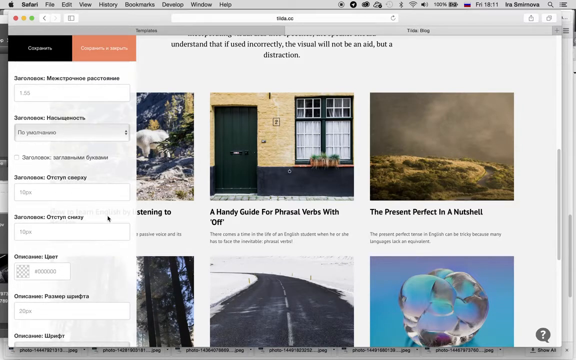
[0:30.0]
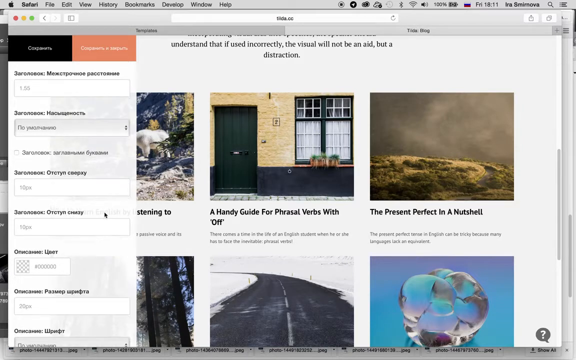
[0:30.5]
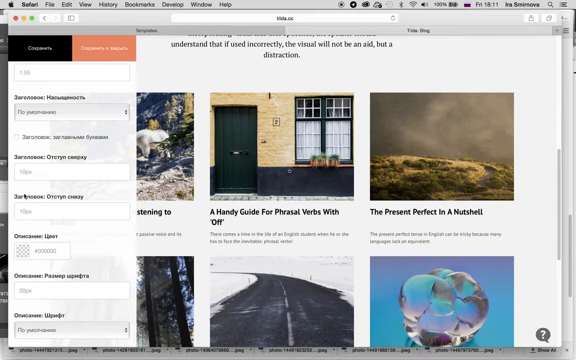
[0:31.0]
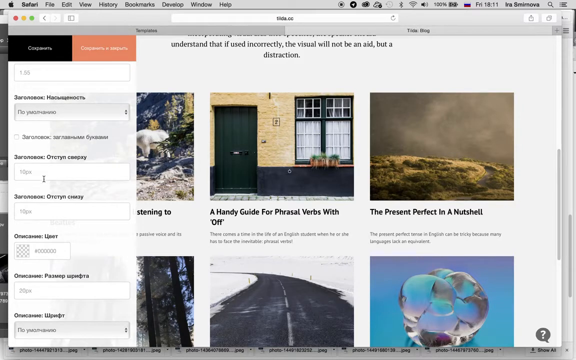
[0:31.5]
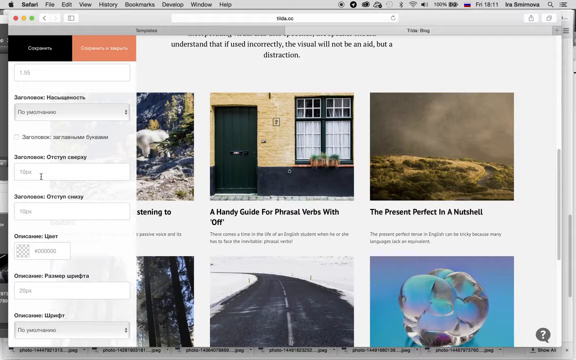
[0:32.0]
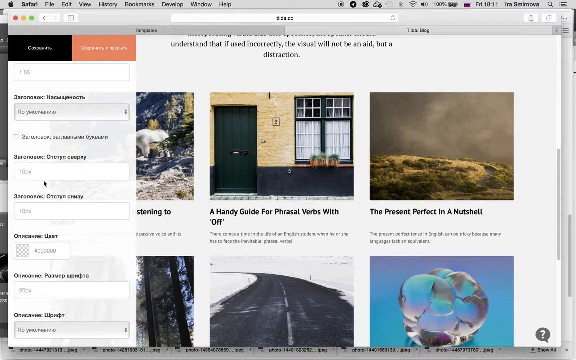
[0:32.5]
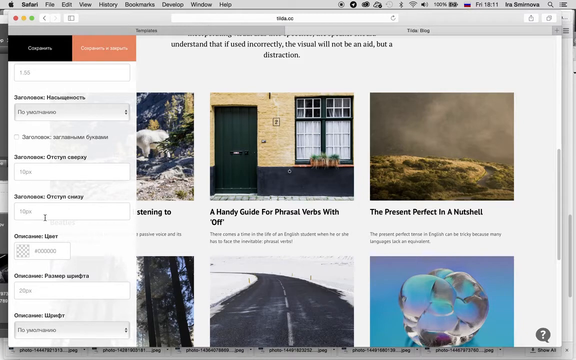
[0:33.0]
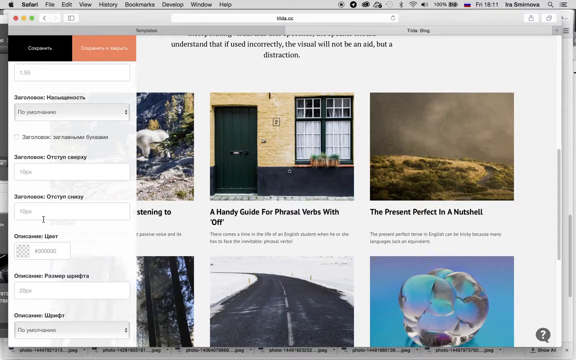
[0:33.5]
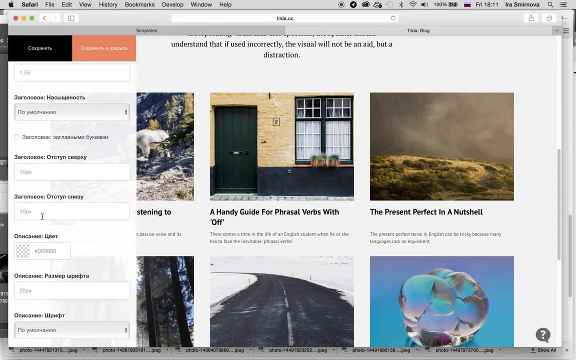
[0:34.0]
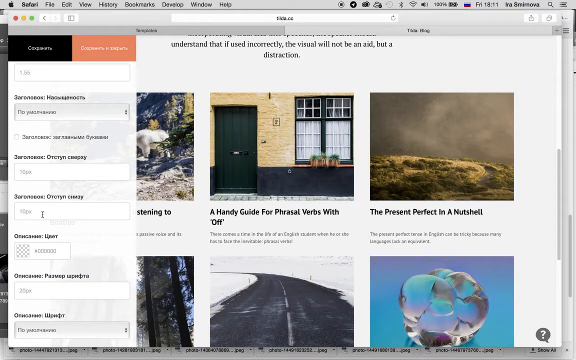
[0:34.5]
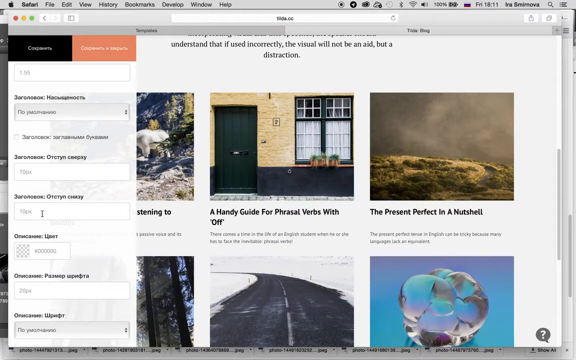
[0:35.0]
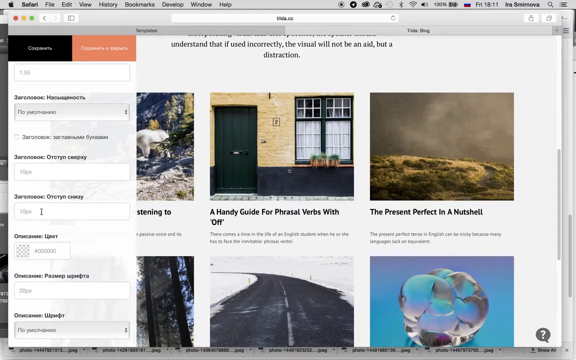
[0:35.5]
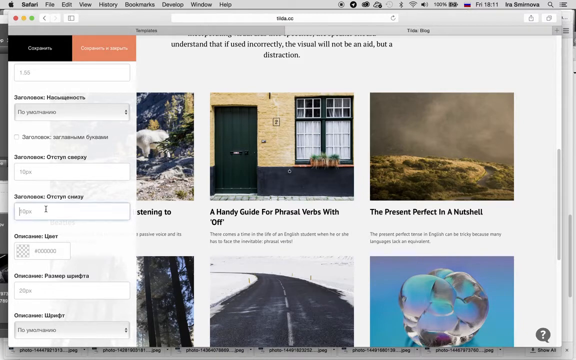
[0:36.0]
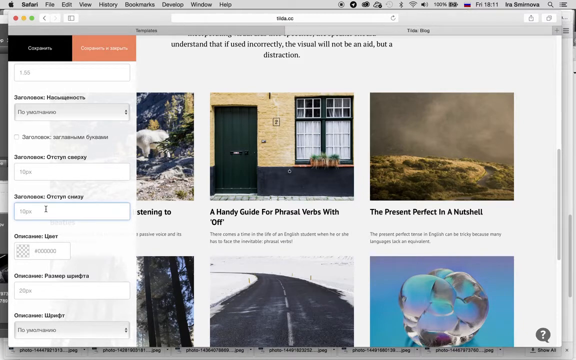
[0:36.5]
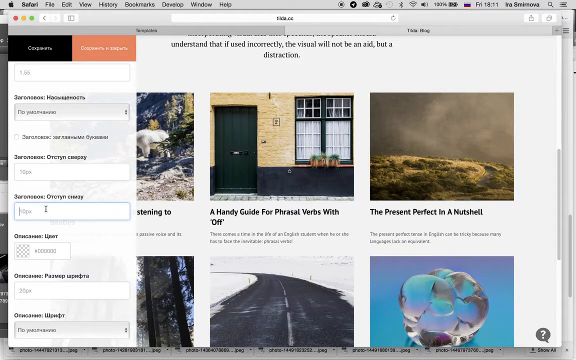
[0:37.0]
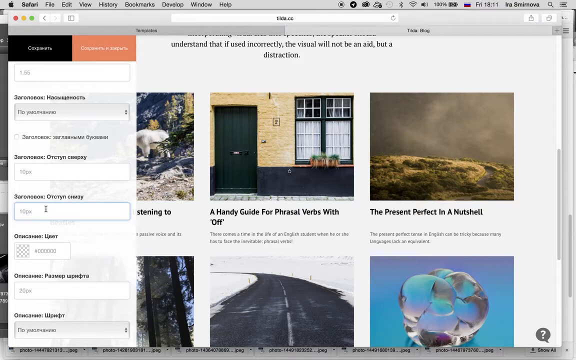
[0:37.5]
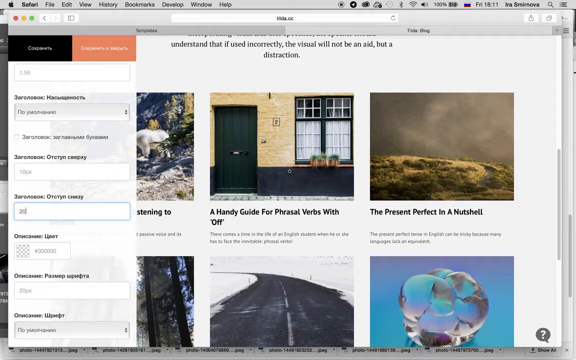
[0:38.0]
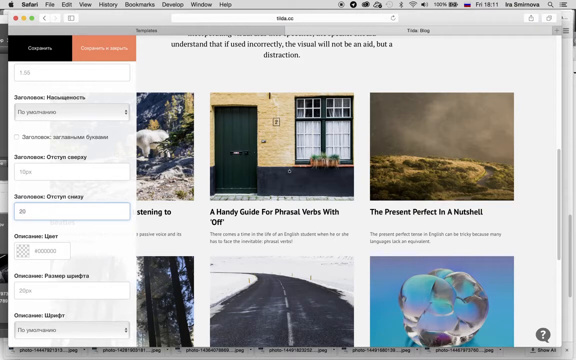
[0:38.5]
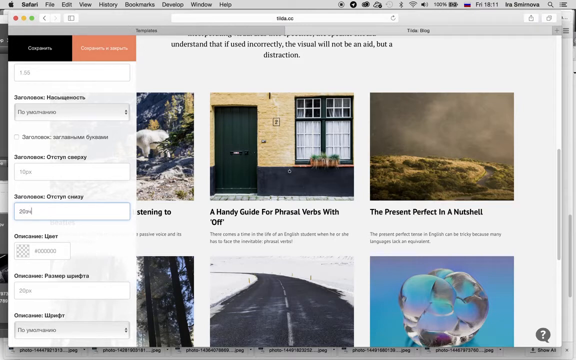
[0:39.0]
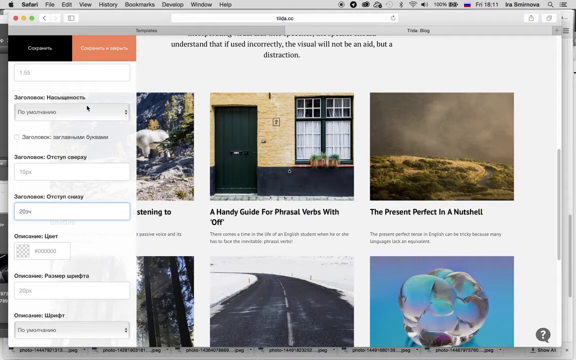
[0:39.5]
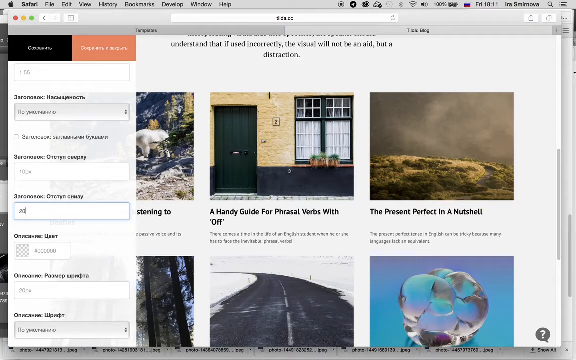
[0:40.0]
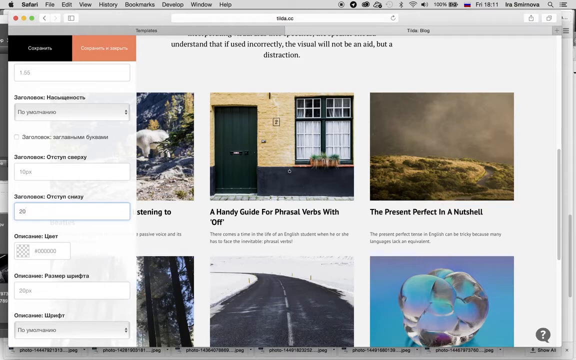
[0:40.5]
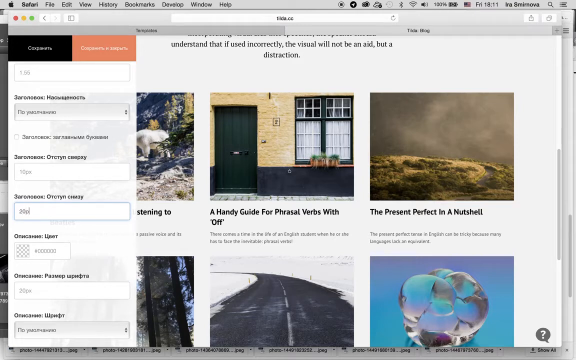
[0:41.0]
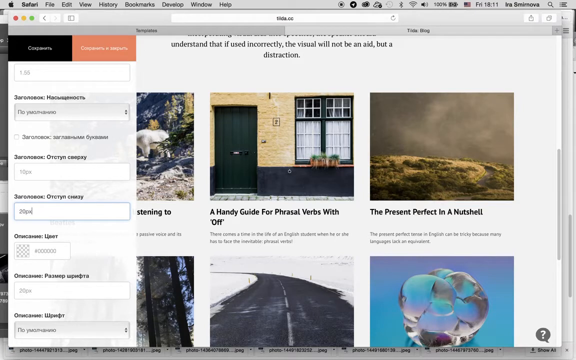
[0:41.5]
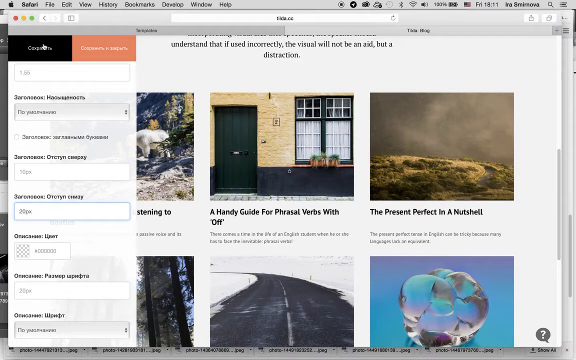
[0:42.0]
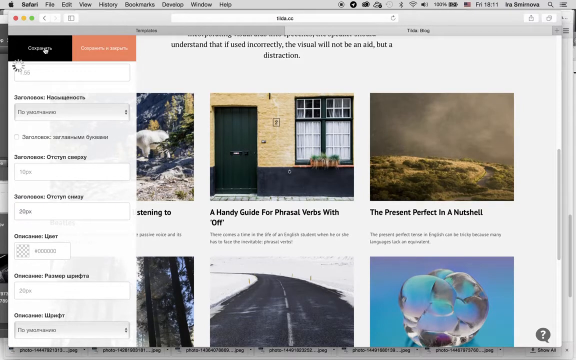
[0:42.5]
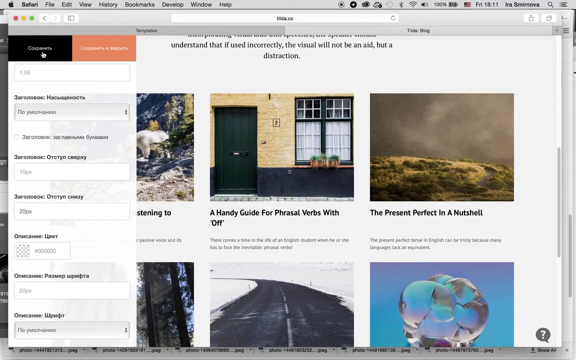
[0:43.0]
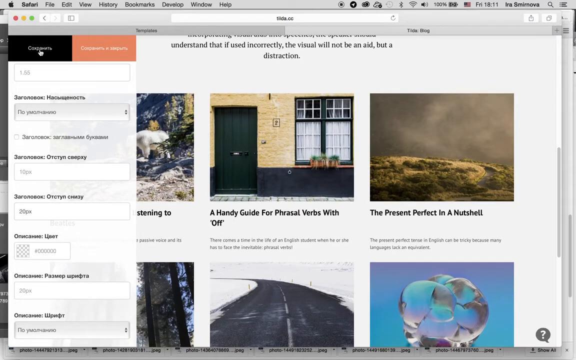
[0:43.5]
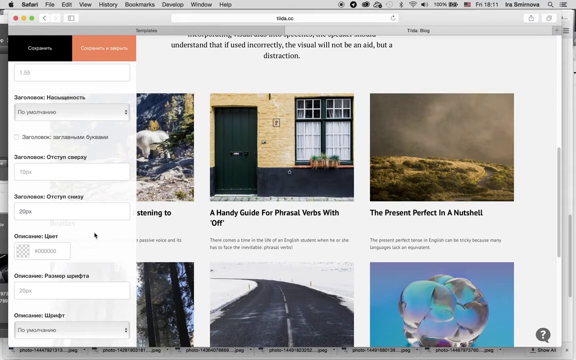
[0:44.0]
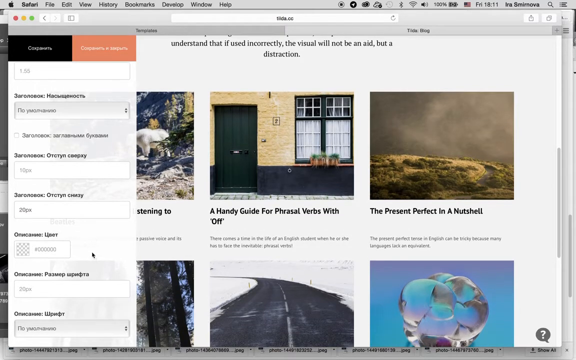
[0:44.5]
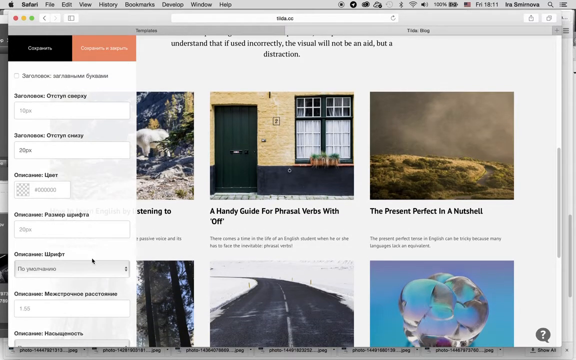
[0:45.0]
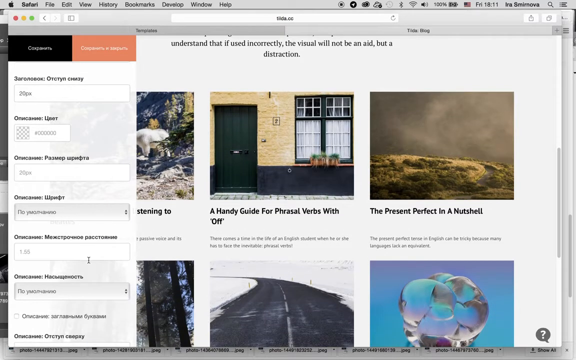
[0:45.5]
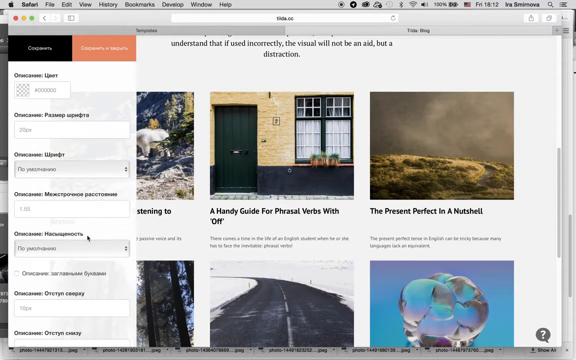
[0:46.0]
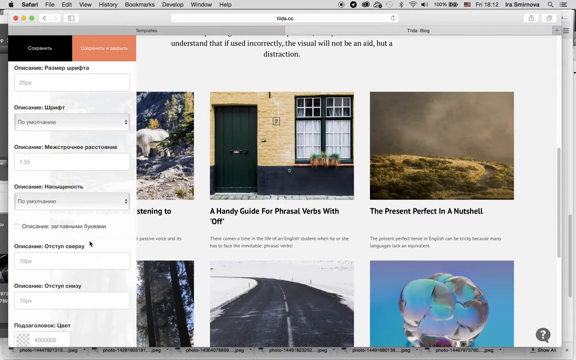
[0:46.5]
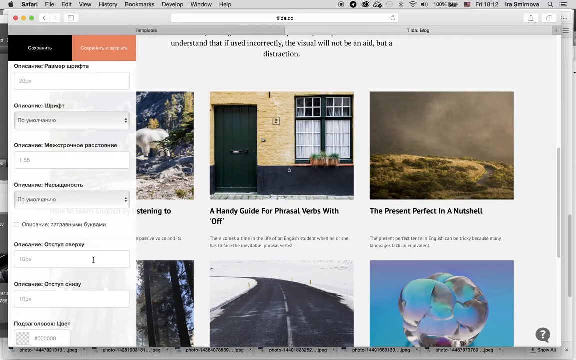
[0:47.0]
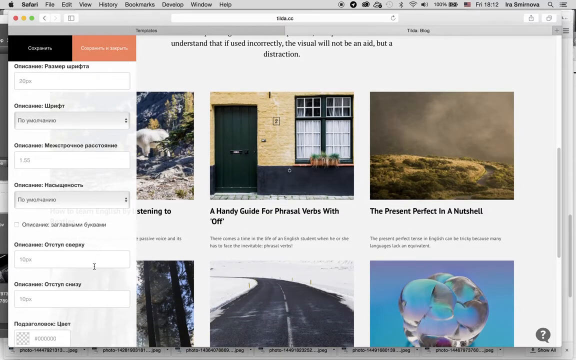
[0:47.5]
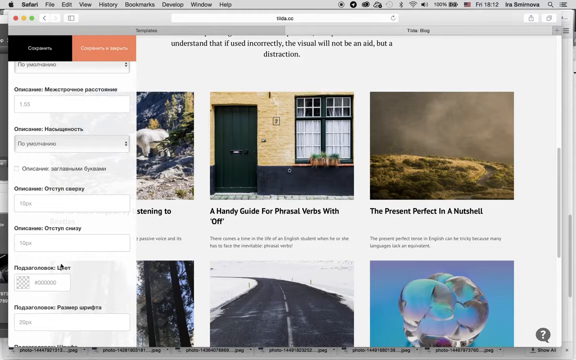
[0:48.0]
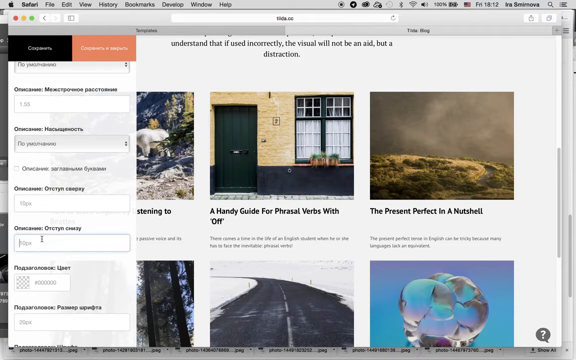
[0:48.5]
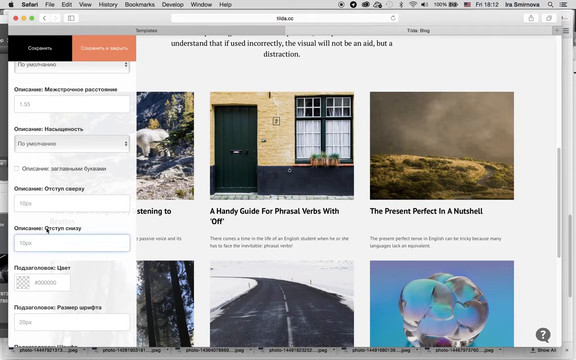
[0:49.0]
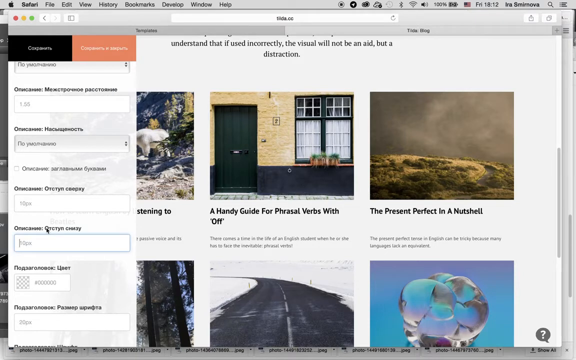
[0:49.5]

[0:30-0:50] What looks like a website with a window-style interface is shown. Someone has probably opened a filter of sorts, which contains what looks like Russian characters. Each window holds a different topic, and a couple of topics are in view. One topic reads "a handy guide for phrasal verbs with off" and shows a residence or building of sorts that looks like it is in the UK, judging by its style. The building has a forest green door and a bottom trim in the same forest green. Its bricks look yellowish and creamy in color. Two windows to the right of the door are separated by bricks; they have white curtains and partially white framing with a forest green outline that is also part of the frame. Another topic reads "the present perfect in a nutshell" and shows an arid-looking landscape with a road running through it and going off into the distance. The sky above looks either hazy, or maybe like a dust storm or a storm in the distance, contrasted by clouds in the foreground.